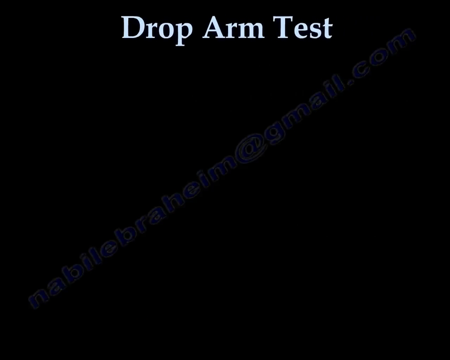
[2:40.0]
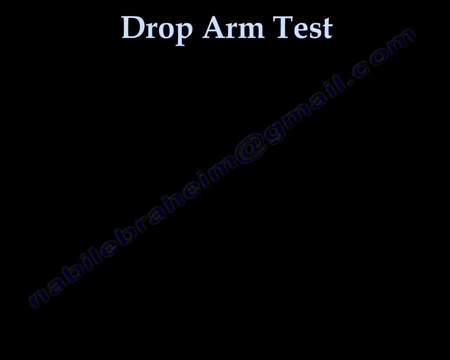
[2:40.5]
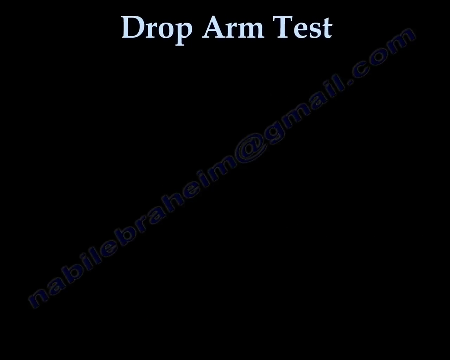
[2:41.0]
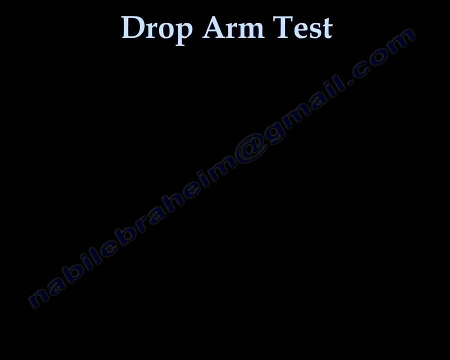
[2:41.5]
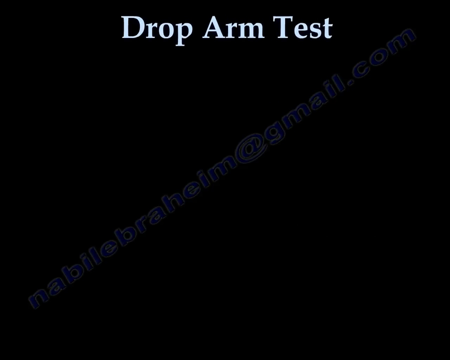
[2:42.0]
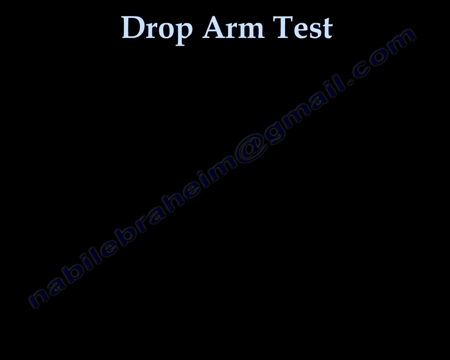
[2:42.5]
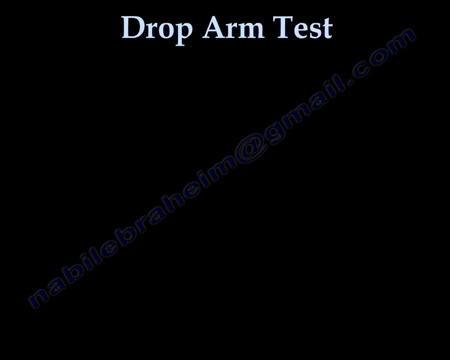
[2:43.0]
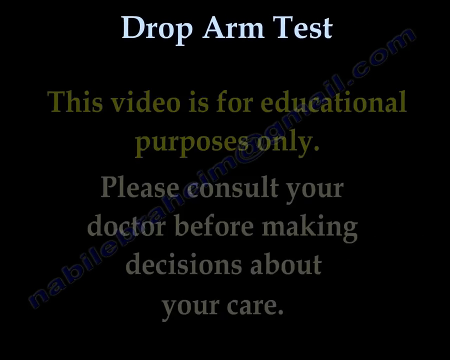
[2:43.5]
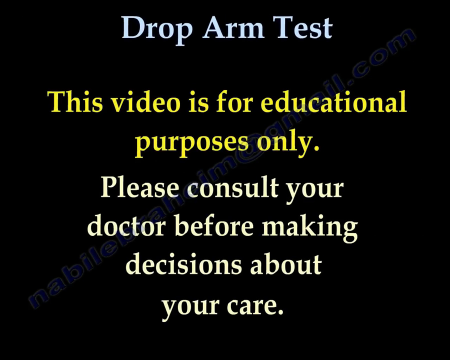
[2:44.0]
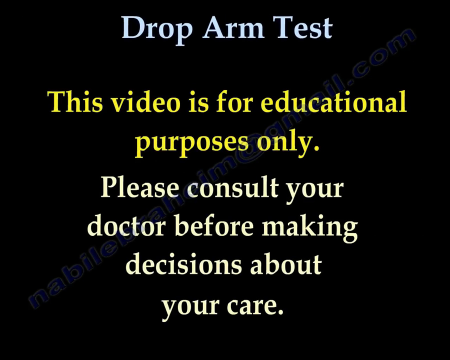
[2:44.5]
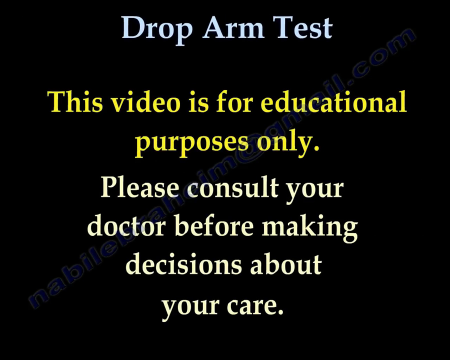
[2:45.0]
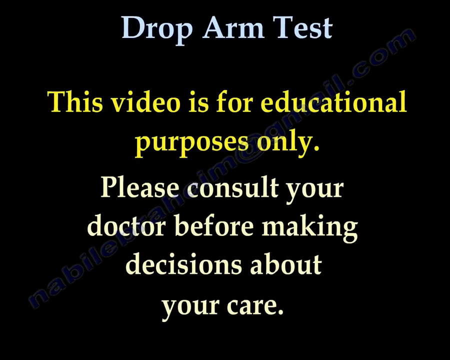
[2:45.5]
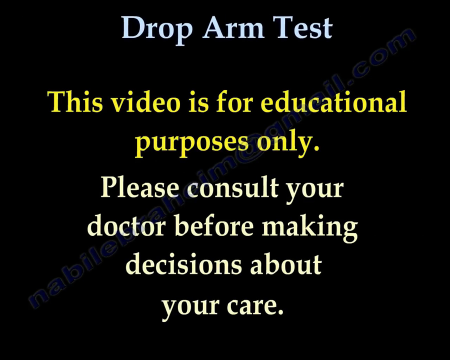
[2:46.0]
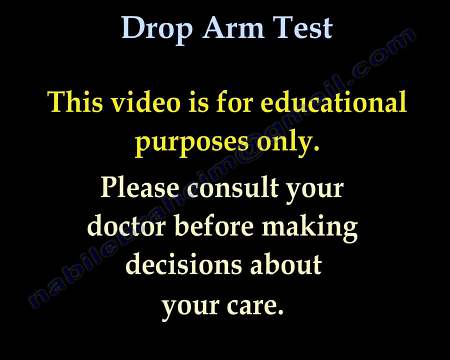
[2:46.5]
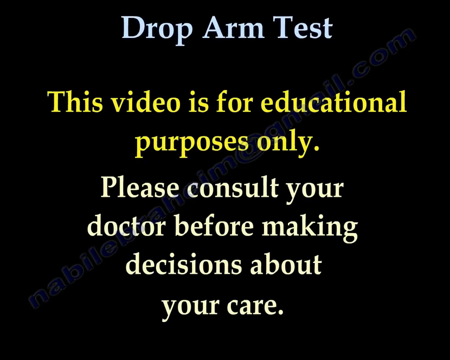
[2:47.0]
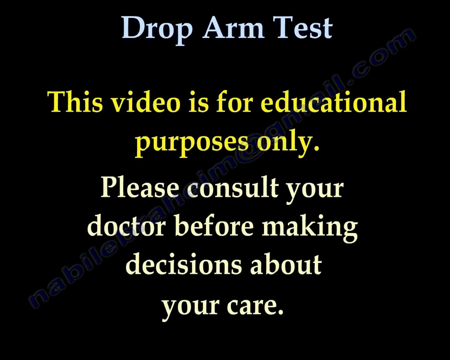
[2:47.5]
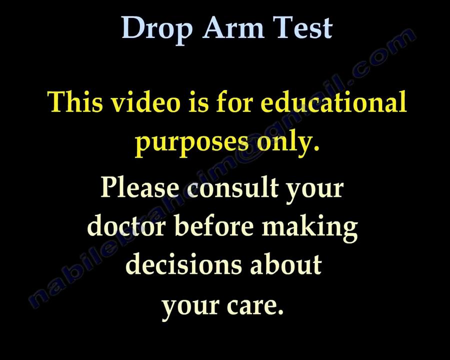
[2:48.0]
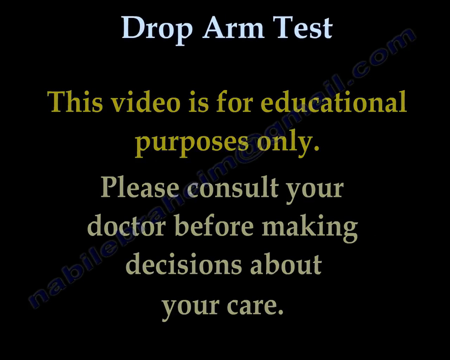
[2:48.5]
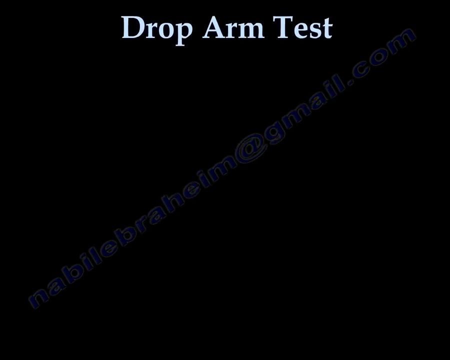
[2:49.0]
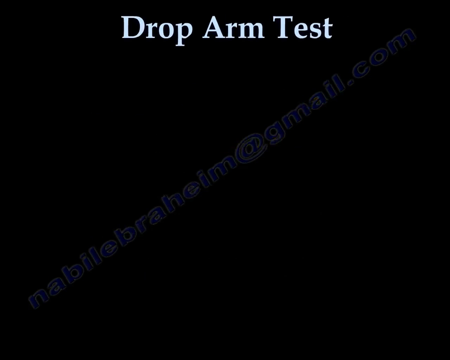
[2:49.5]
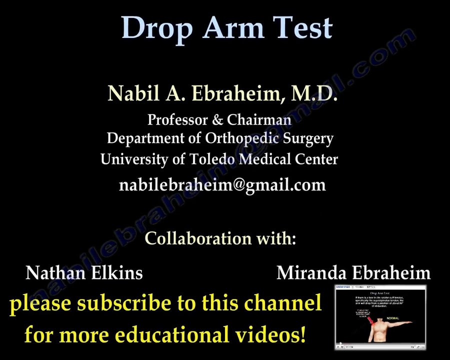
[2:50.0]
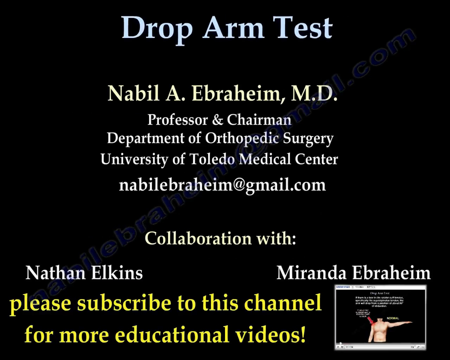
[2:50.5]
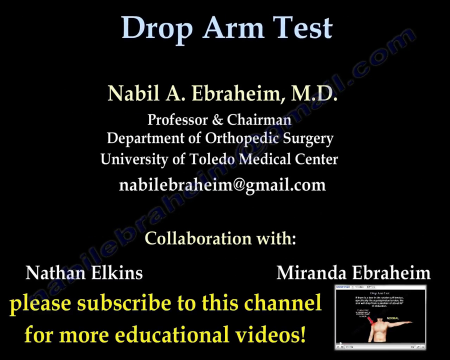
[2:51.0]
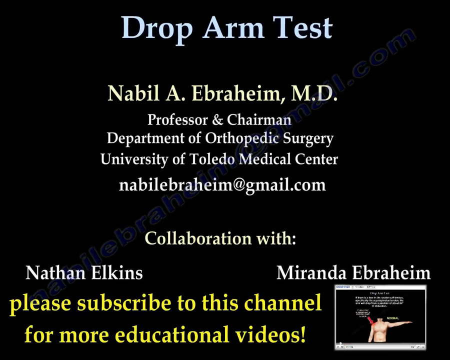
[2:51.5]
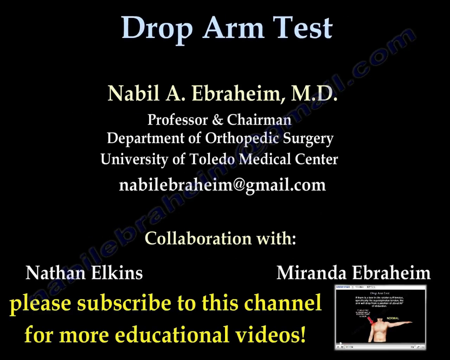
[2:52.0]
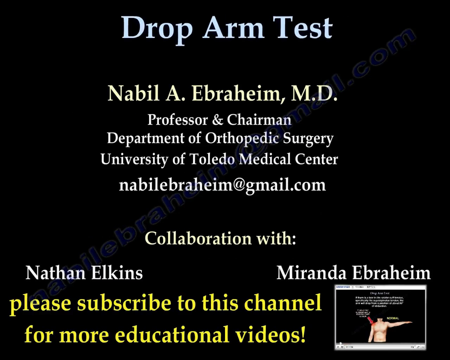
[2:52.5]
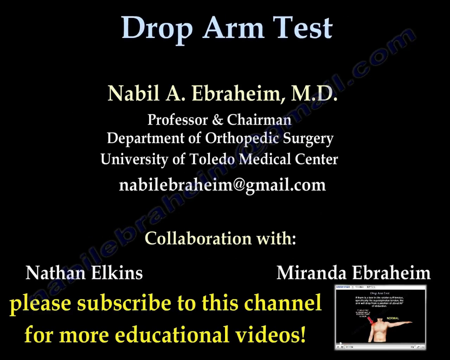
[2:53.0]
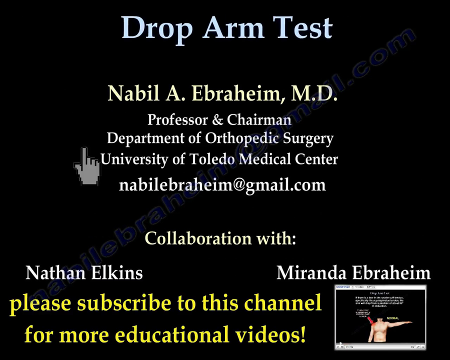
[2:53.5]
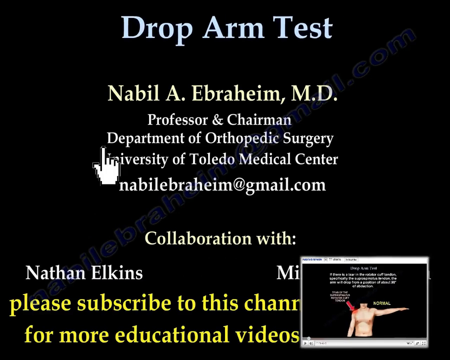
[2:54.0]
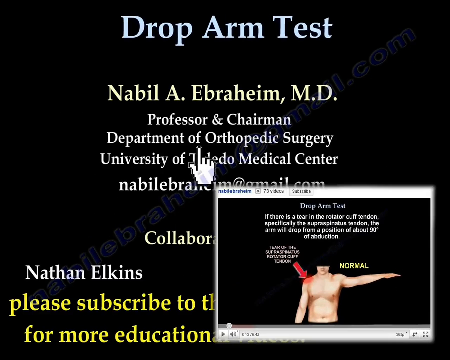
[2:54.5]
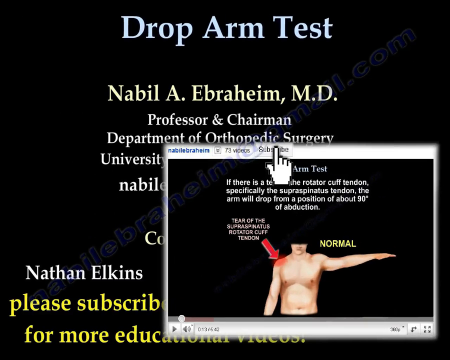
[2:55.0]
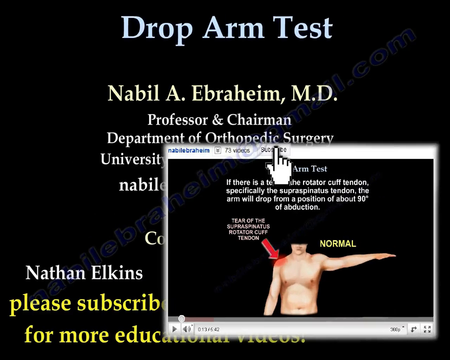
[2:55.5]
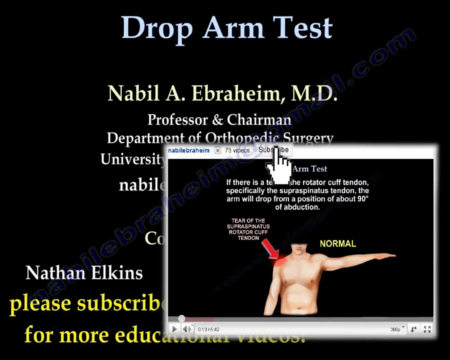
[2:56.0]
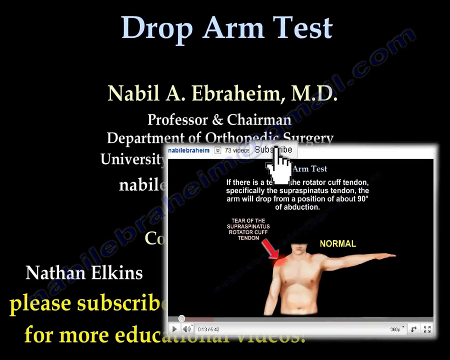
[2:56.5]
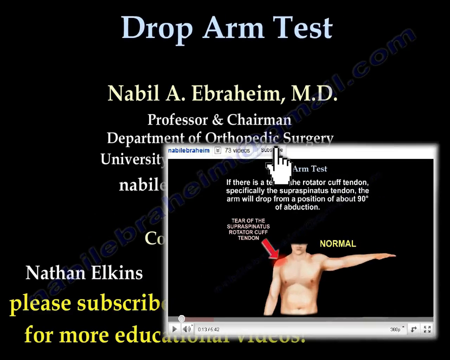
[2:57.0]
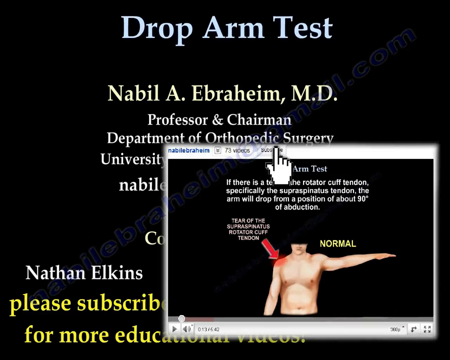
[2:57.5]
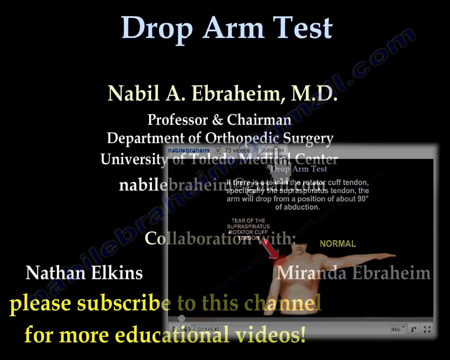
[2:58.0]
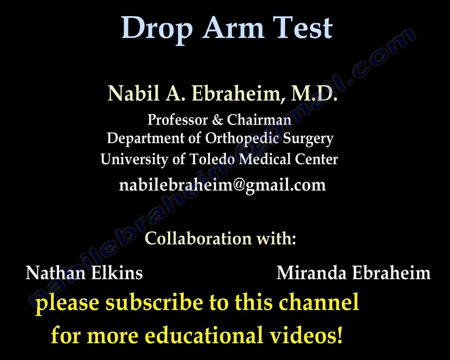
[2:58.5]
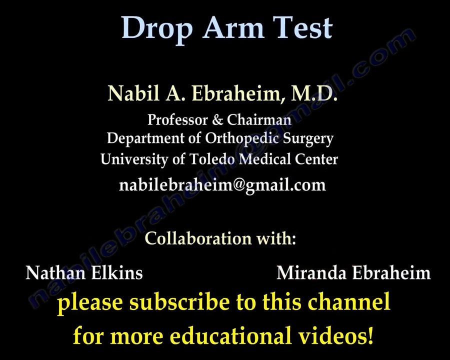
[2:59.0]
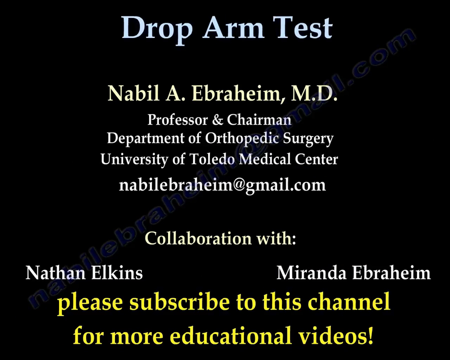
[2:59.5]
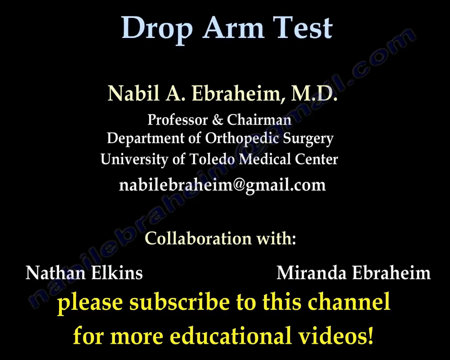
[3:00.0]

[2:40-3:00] The video returns to the black background with the drop arm test and shows writing, some in yellow and some in white. Text says the video is for educational purposes: "Please consult your doctor before making decisions about your care." It then shows "Nabil A. Ibrahim, MD, Professor and Chairman, Department of Orthopedic Surgery, University of Toledo Medical Center," noting a collaboration with Miranda Ibrahim. A credit for Nathan Elkins says "please subscribe to this channel."